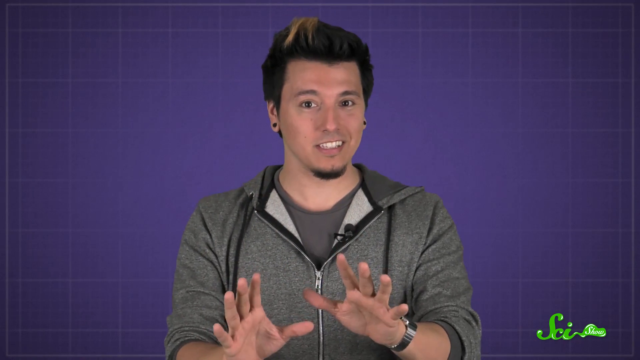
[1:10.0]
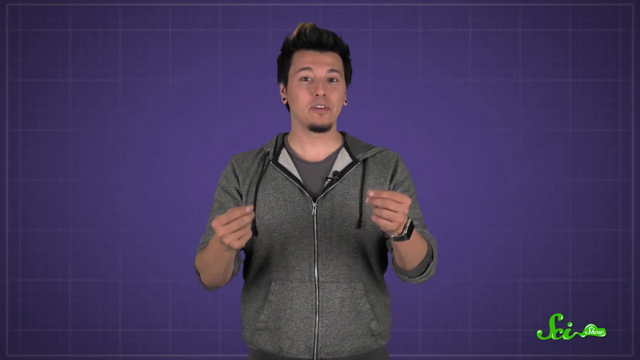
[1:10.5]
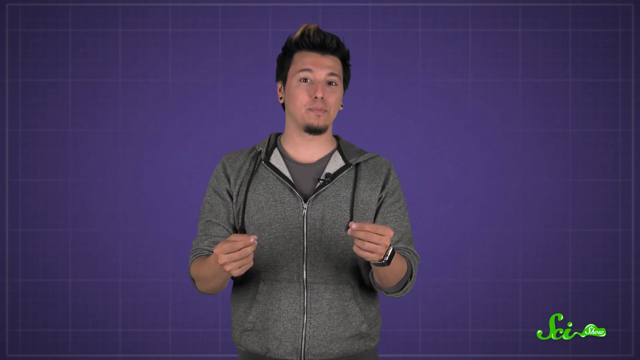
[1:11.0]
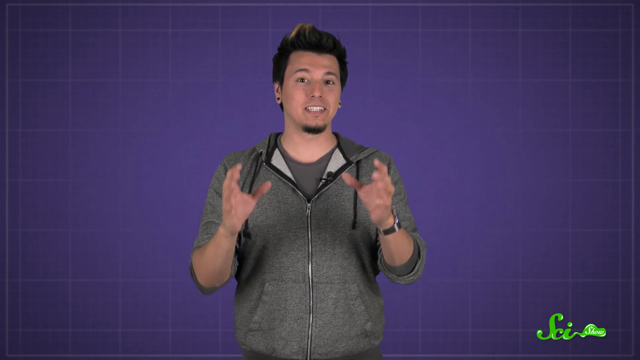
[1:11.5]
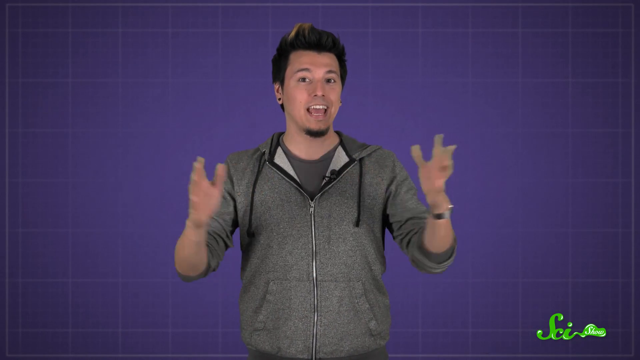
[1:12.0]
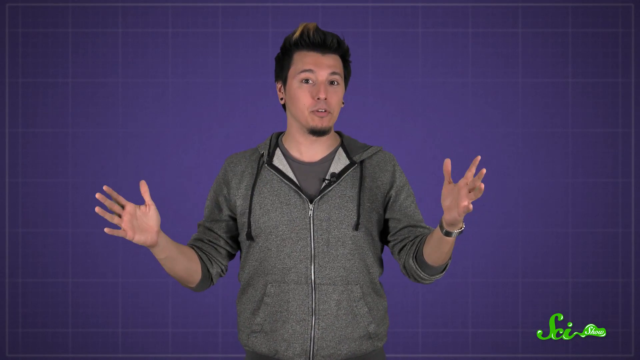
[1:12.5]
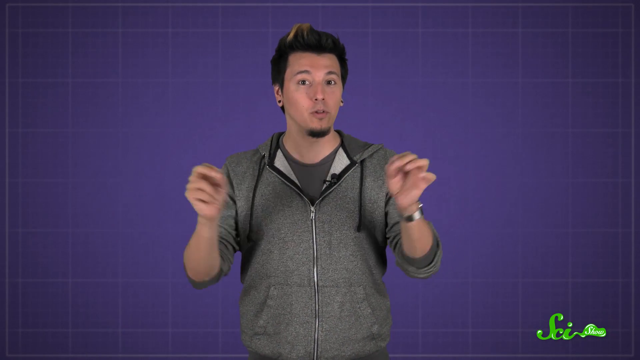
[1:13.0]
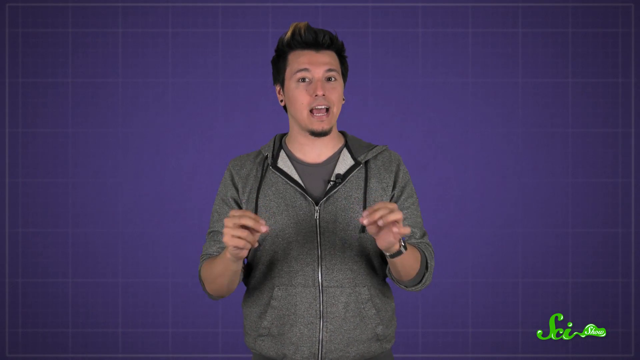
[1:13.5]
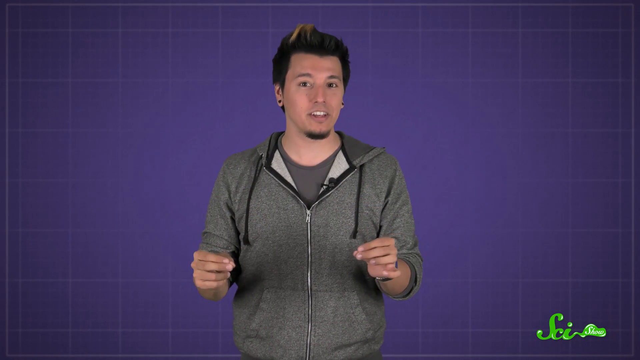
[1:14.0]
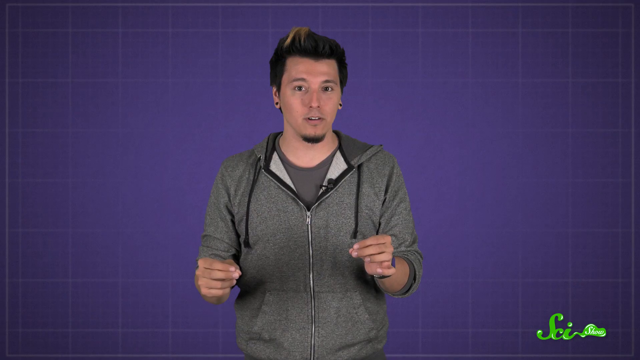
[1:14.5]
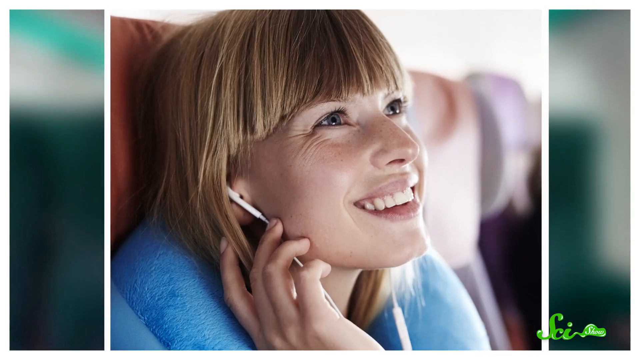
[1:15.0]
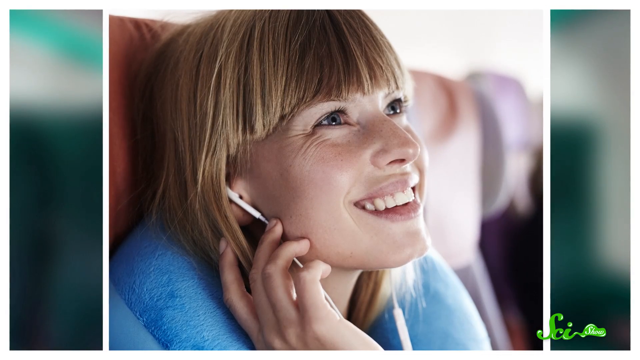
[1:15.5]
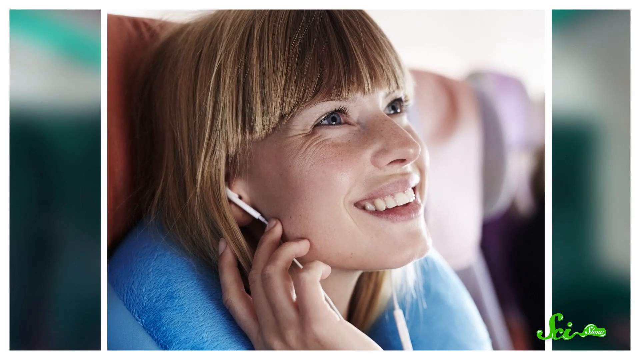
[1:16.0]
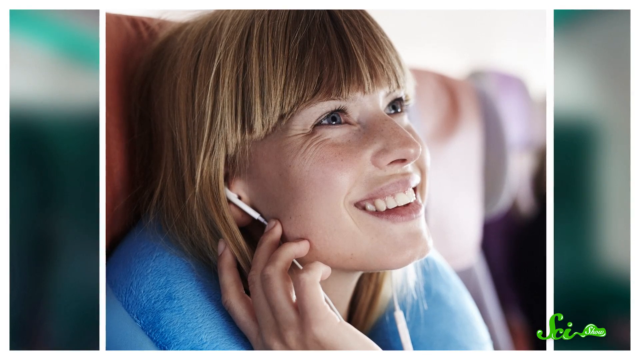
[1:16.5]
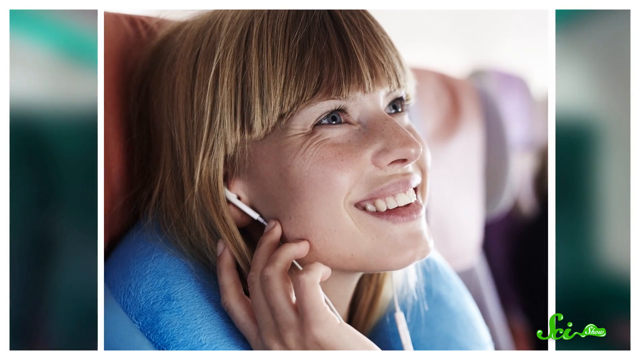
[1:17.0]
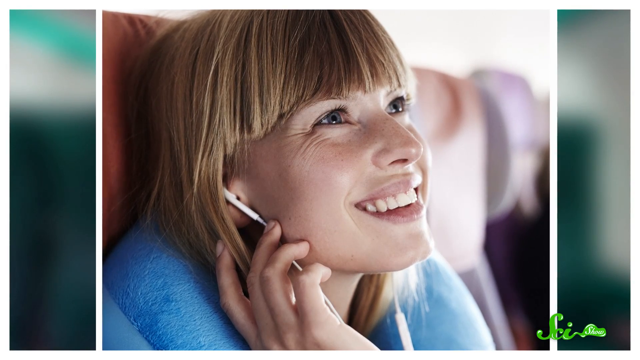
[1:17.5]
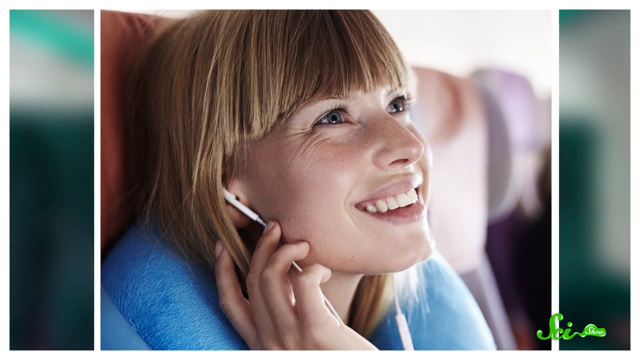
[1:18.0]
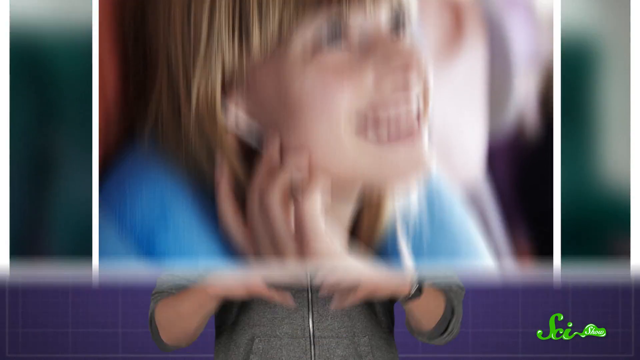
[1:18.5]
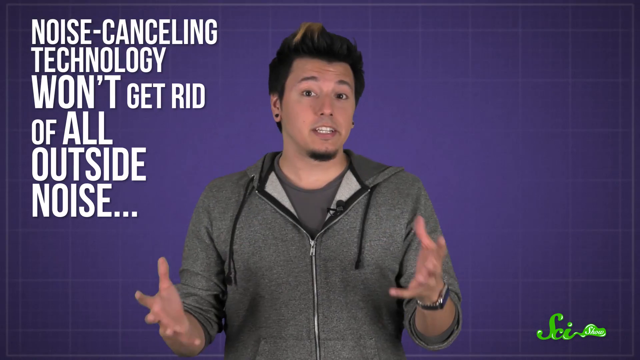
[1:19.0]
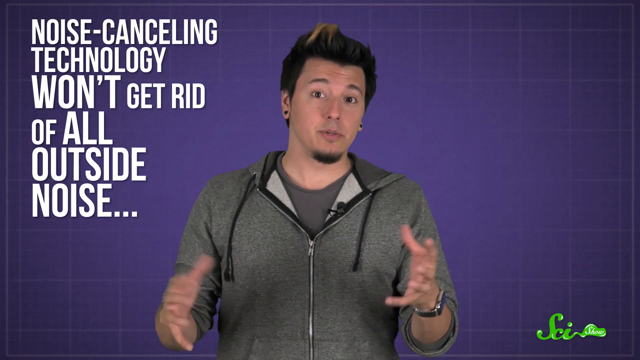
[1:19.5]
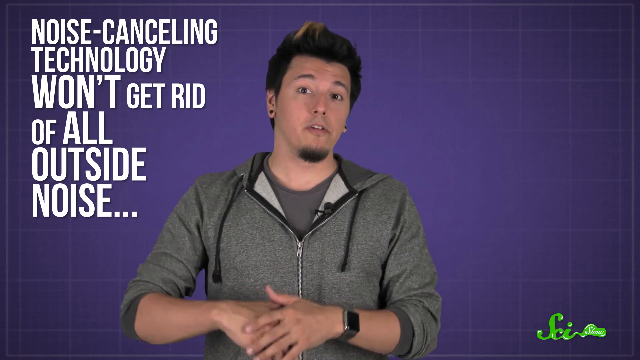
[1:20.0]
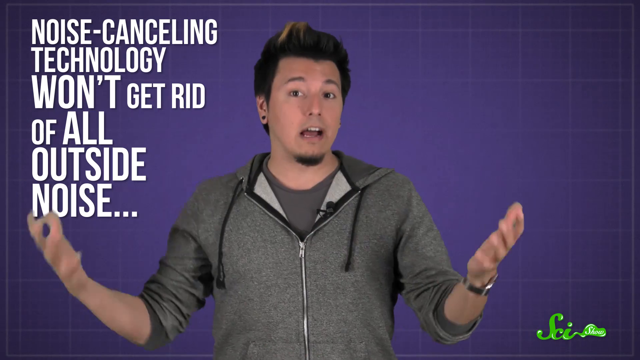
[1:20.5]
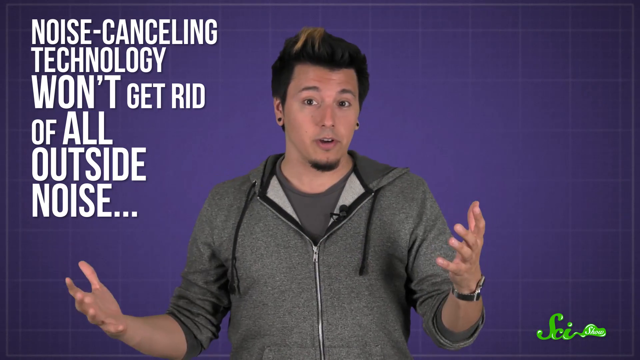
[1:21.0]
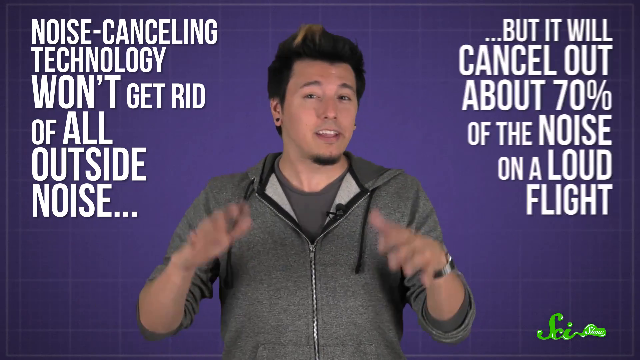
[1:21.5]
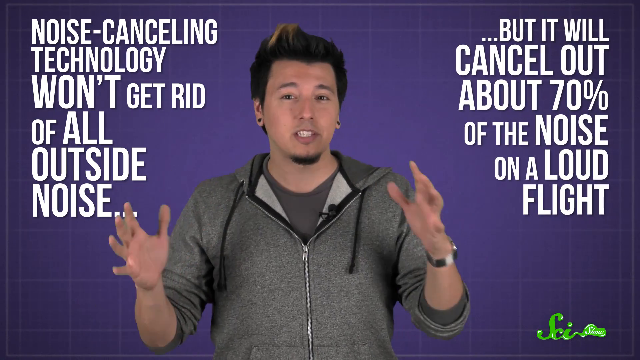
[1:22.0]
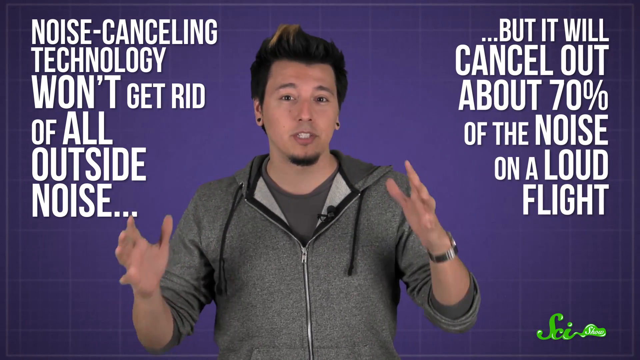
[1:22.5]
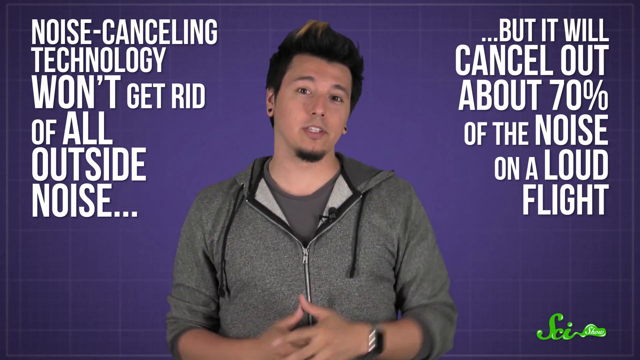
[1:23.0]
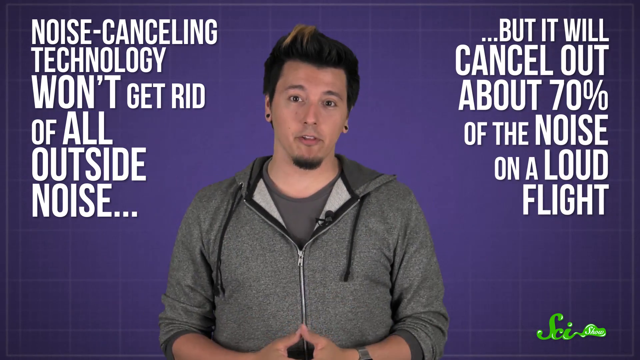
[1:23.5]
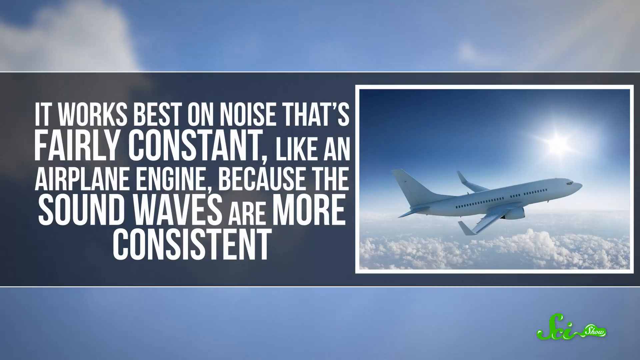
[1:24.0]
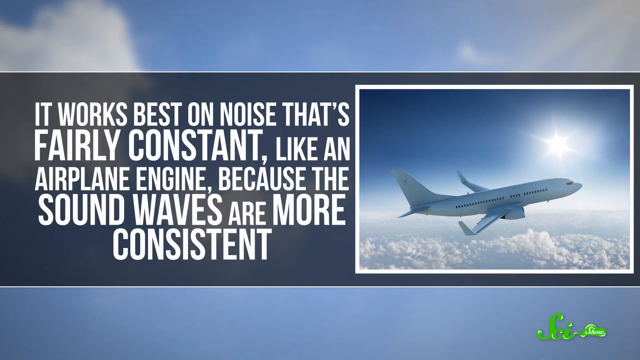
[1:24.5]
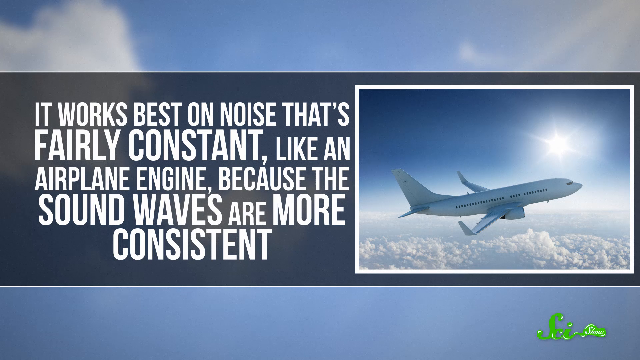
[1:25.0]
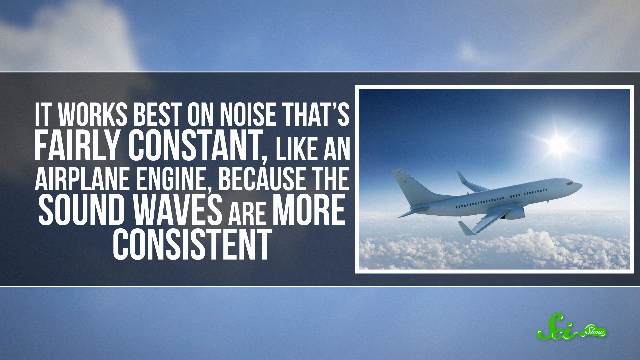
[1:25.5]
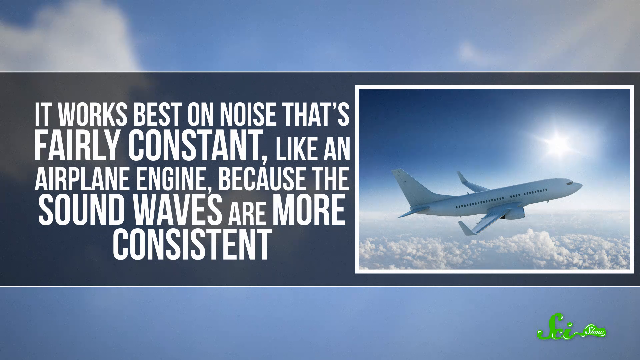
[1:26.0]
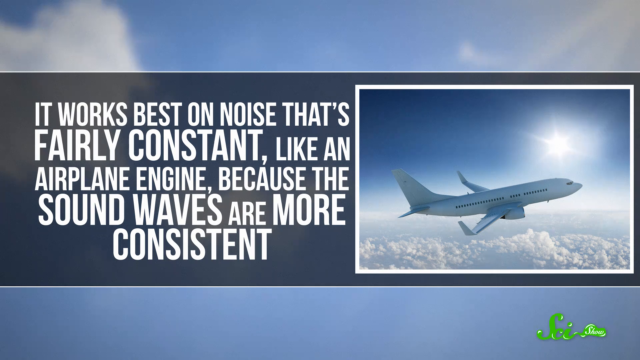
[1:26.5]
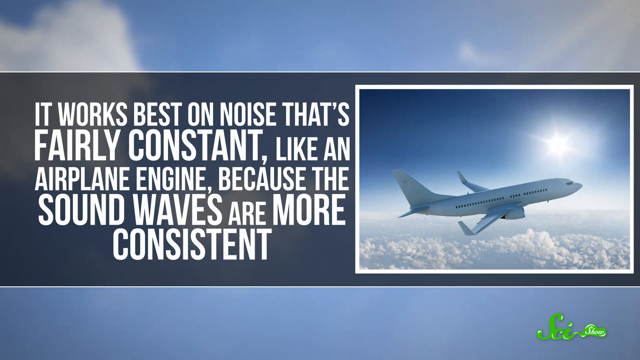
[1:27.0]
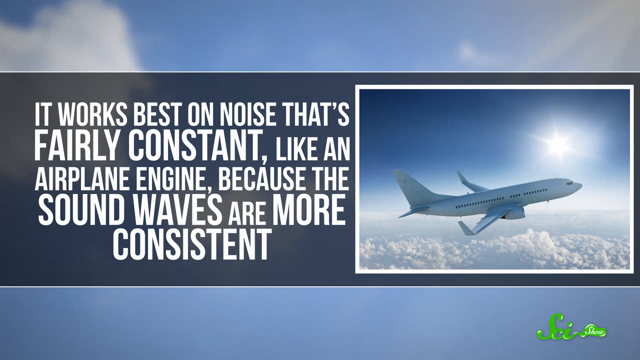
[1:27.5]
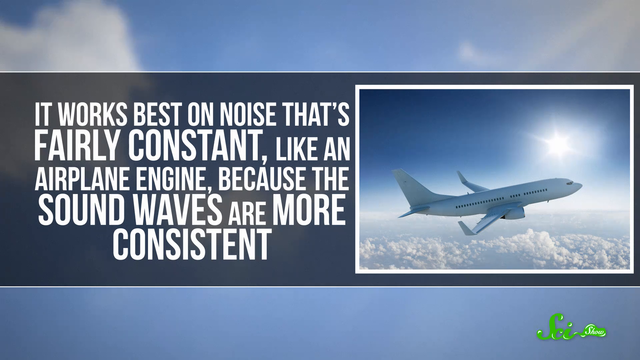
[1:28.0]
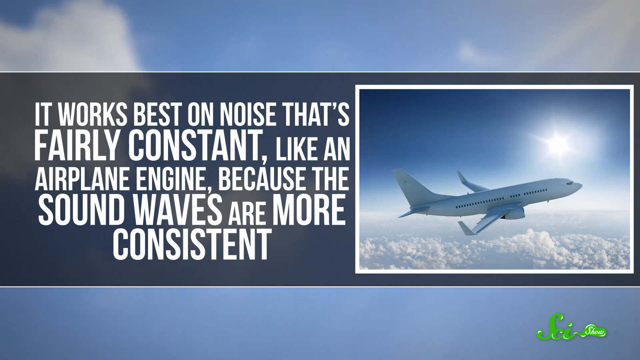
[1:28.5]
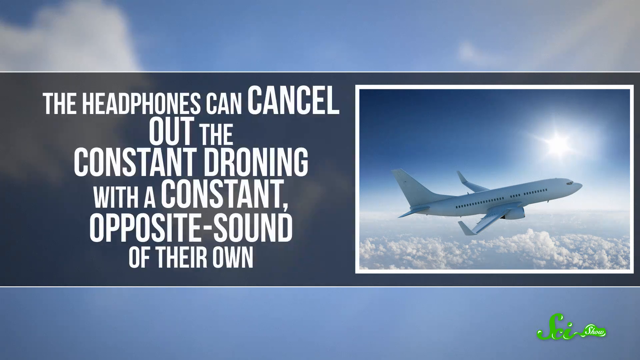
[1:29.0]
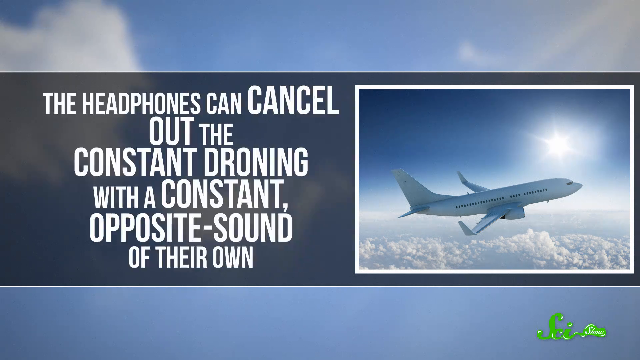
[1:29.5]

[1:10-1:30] The same gentleman stands in front of the blue background in a gray zip-up hoodie and gray t-shirt. The video cuts to a picture of a smiling woman with short, chin-length, kind of blondish-red hair, holding a cell phone, her eyes kind of looking upward; the seat she sits in appears to be maybe an orangey-red color. It cuts back to the gentleman, dead center in front of the blue background. To his left, white block lettering reads "noise cancelling technology won't get rid of all outside noise...", with three periods following the word "noise". He talks with his hands, and on his right side text in white block lettering reads "but it will cancel out about 70% of the noise on a loud flight". The video then cuts to another graphic with an airplane on the right in the sky, with clouds, blue sky and some sunshine behind the plane. To the left of the picture, text in white block lettering reads "it works best on noise that's fairly constant, like an airplane engine, because the sound waves are more consistent."